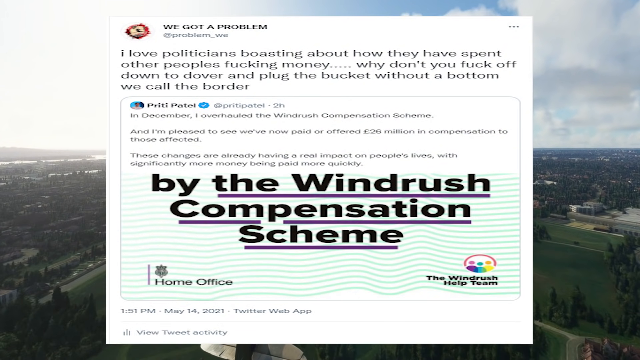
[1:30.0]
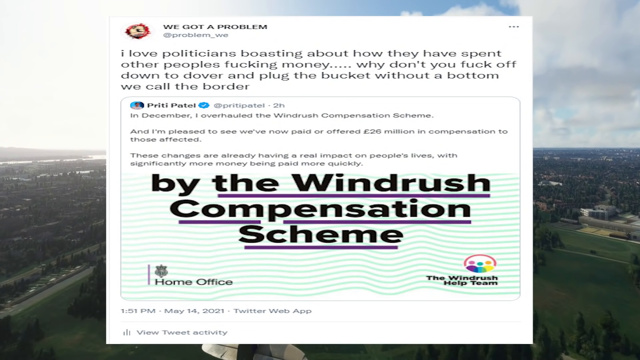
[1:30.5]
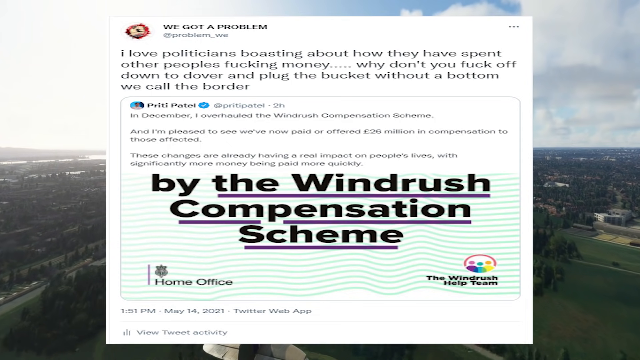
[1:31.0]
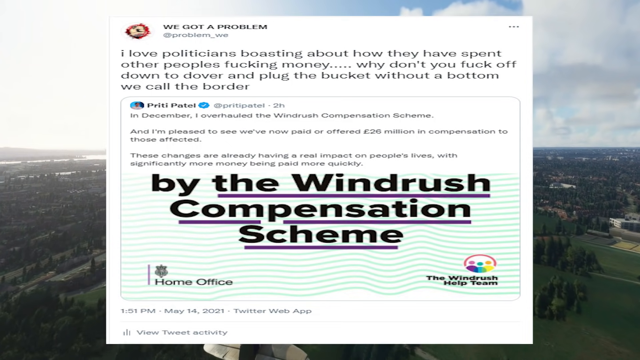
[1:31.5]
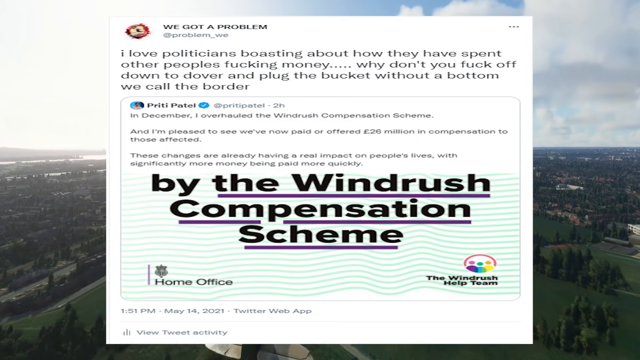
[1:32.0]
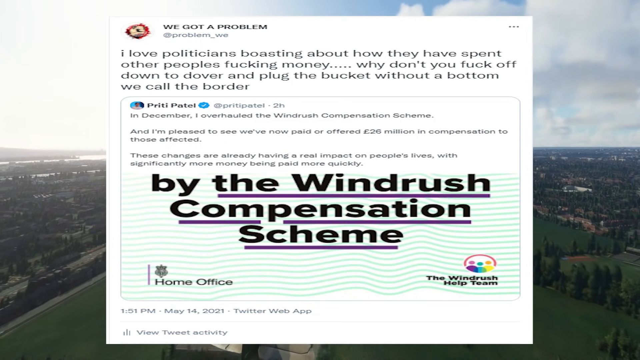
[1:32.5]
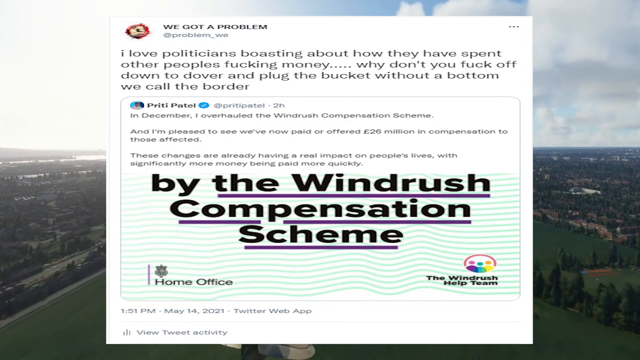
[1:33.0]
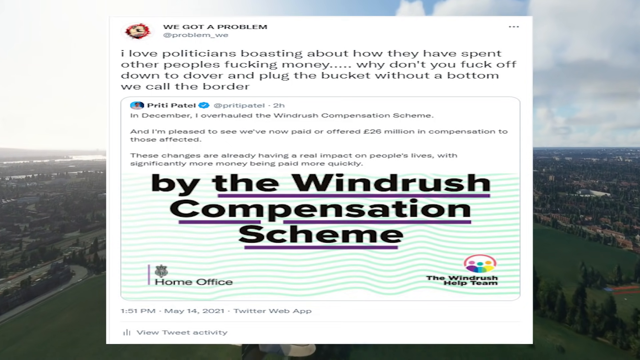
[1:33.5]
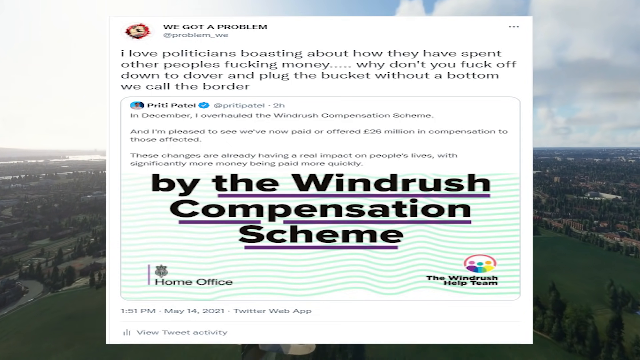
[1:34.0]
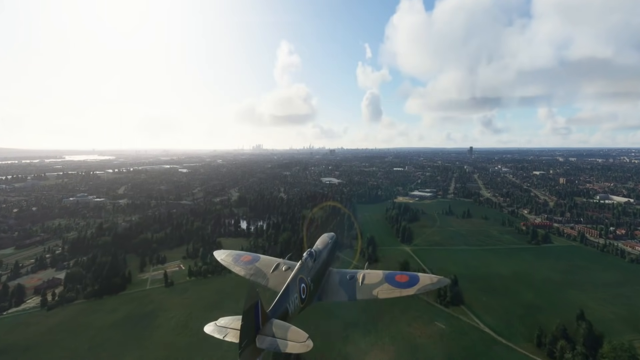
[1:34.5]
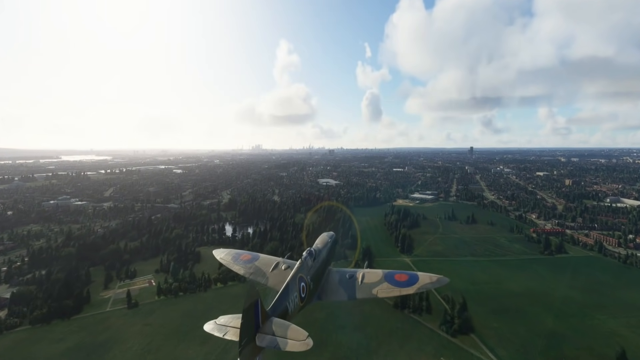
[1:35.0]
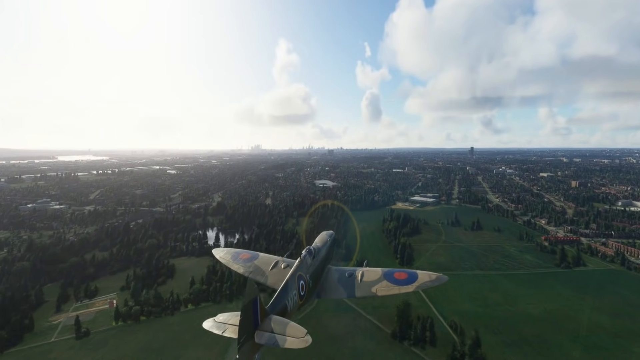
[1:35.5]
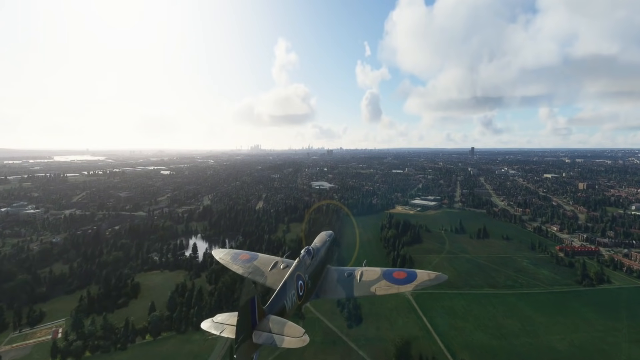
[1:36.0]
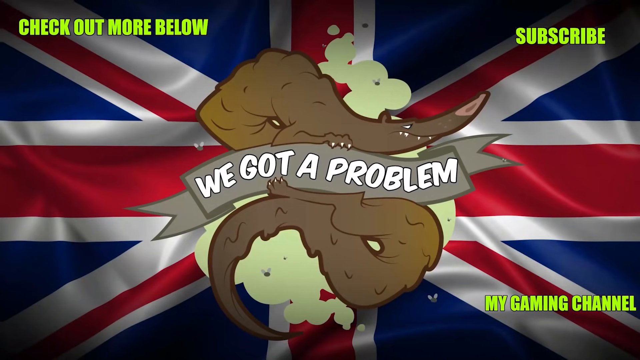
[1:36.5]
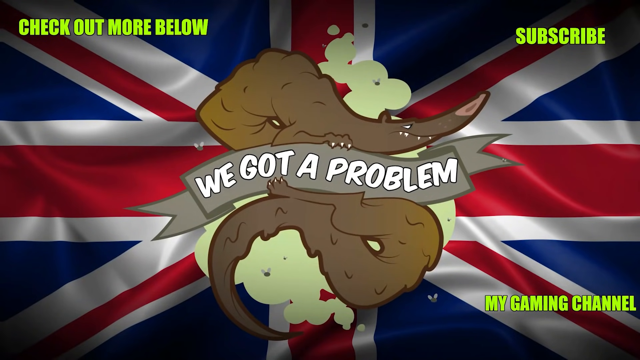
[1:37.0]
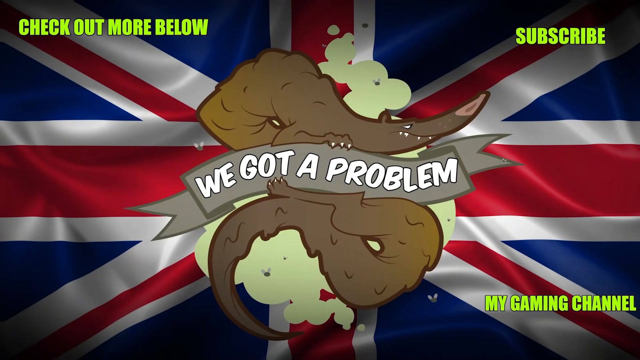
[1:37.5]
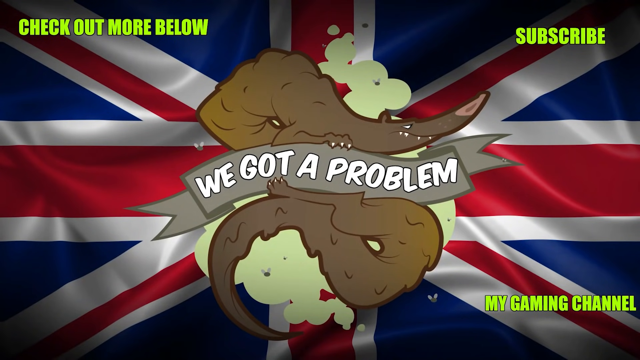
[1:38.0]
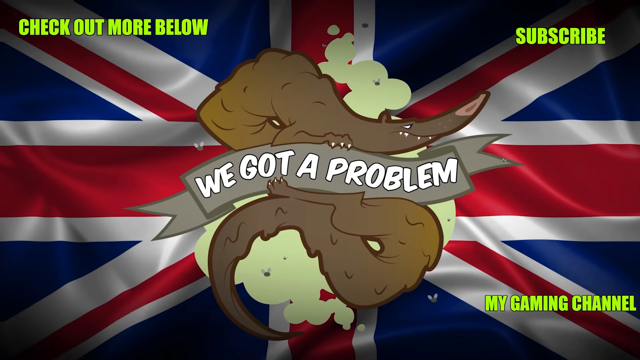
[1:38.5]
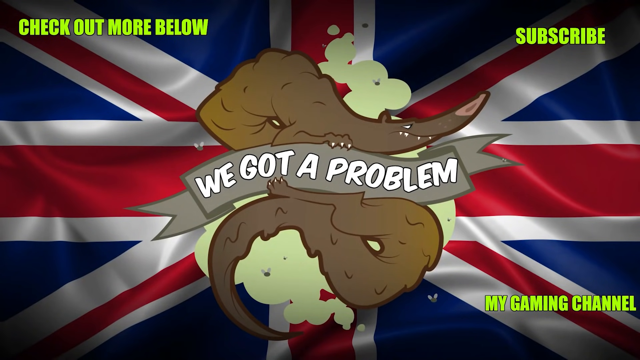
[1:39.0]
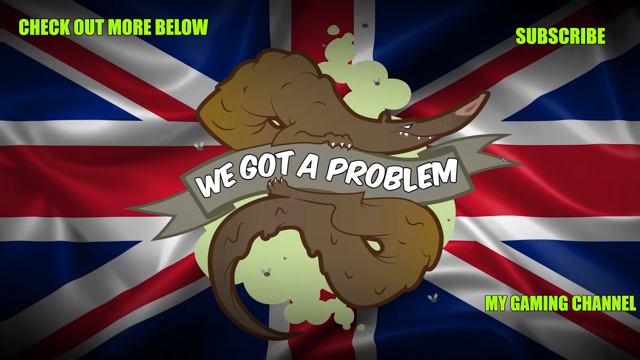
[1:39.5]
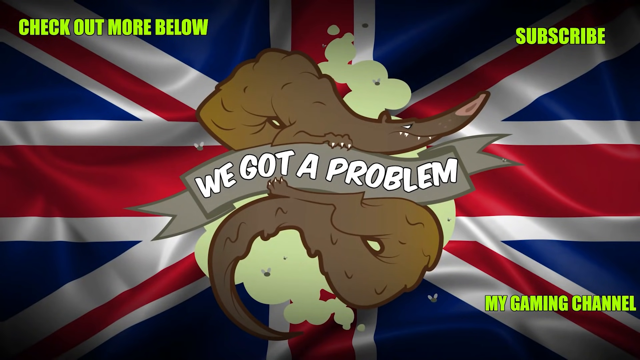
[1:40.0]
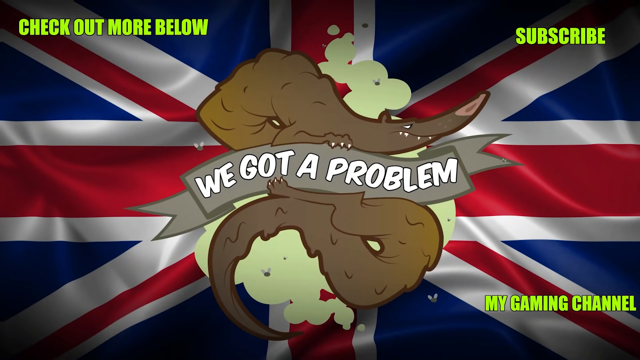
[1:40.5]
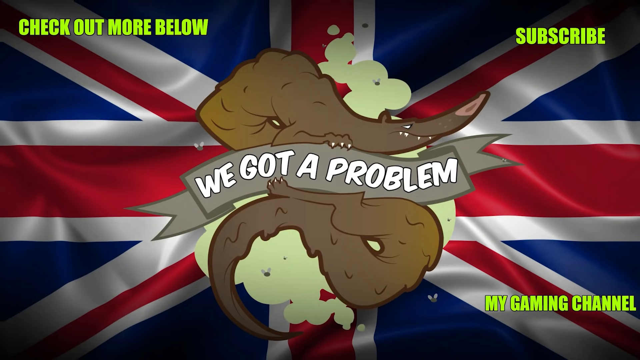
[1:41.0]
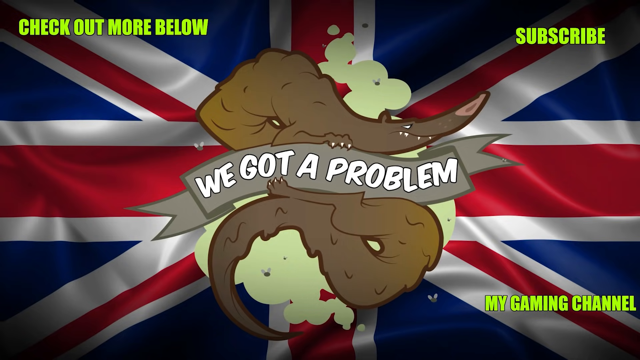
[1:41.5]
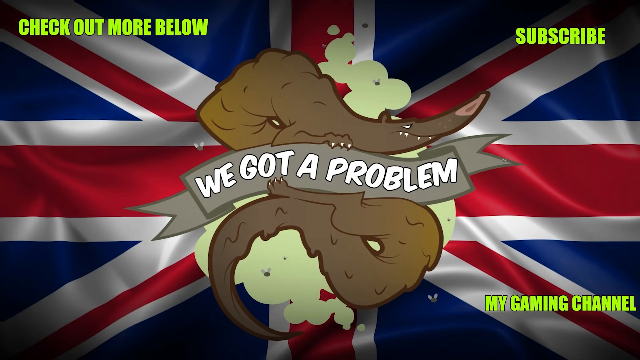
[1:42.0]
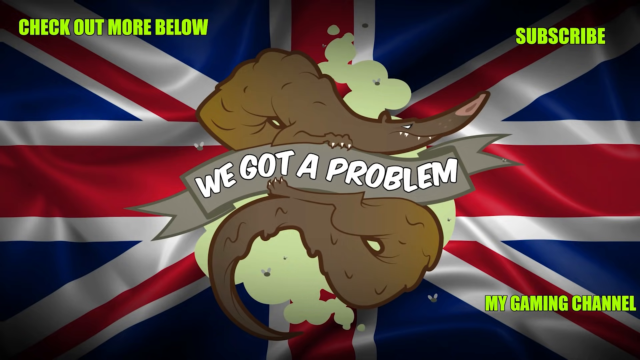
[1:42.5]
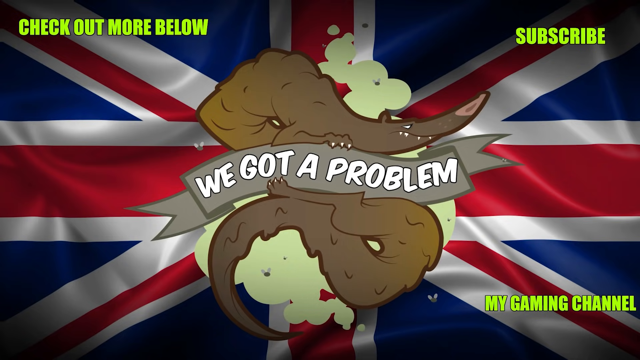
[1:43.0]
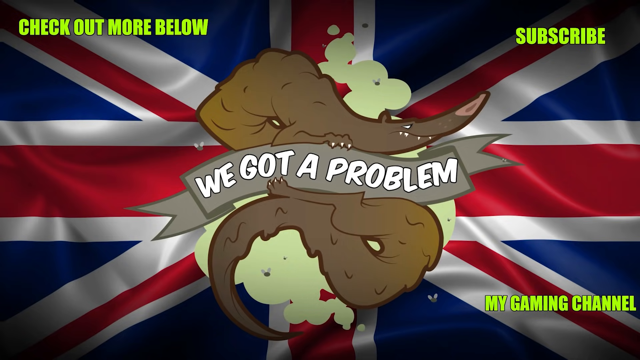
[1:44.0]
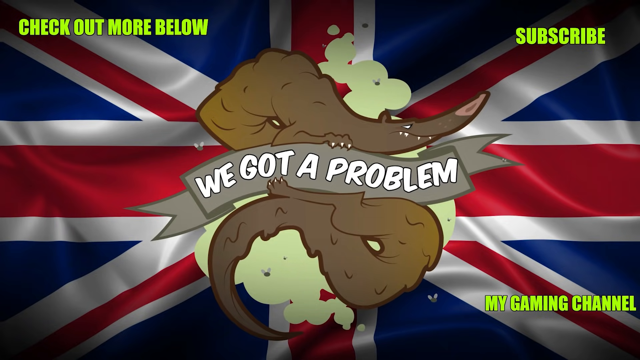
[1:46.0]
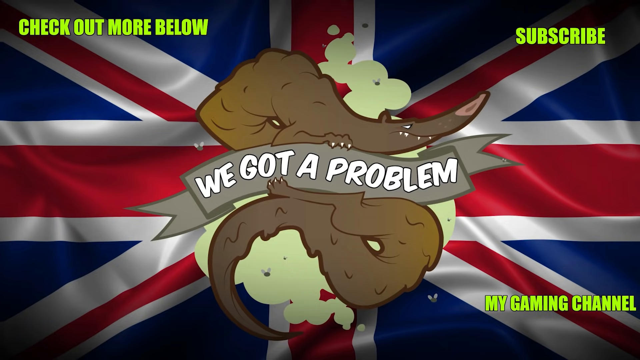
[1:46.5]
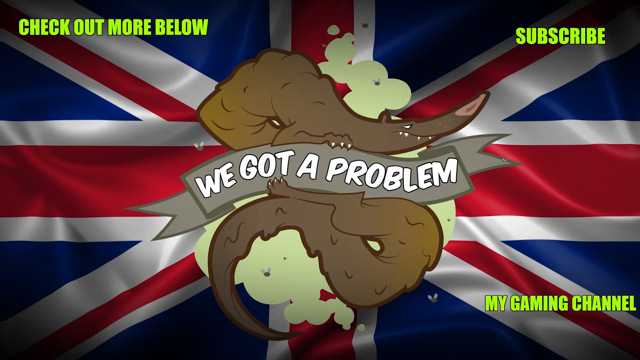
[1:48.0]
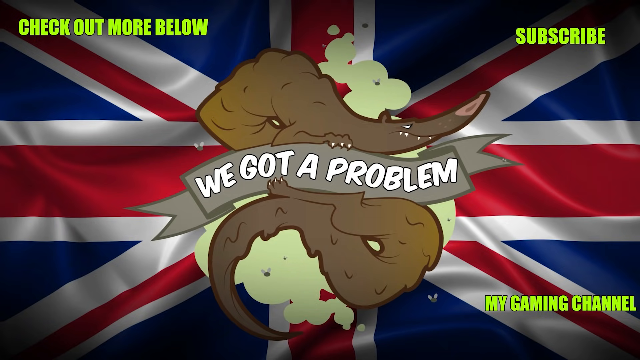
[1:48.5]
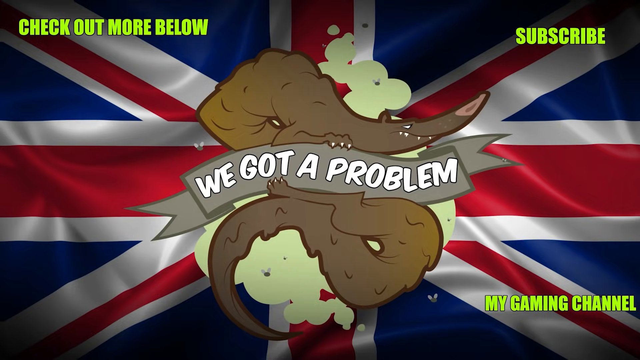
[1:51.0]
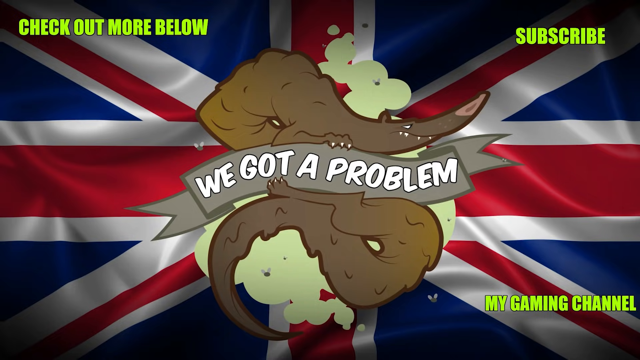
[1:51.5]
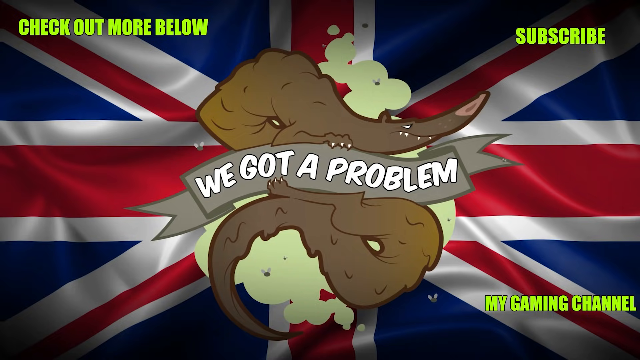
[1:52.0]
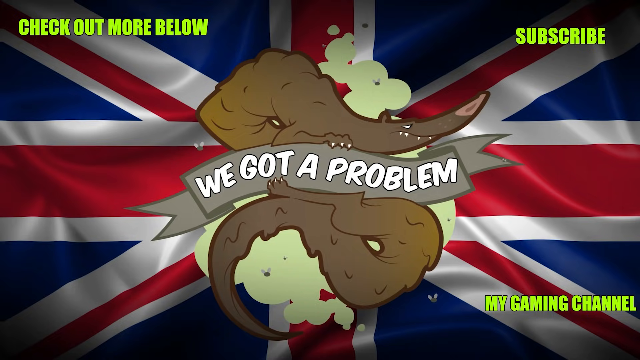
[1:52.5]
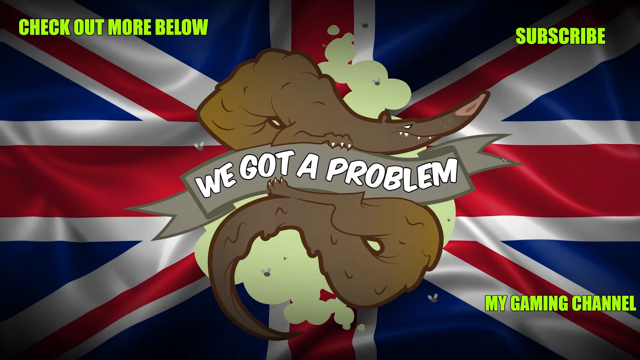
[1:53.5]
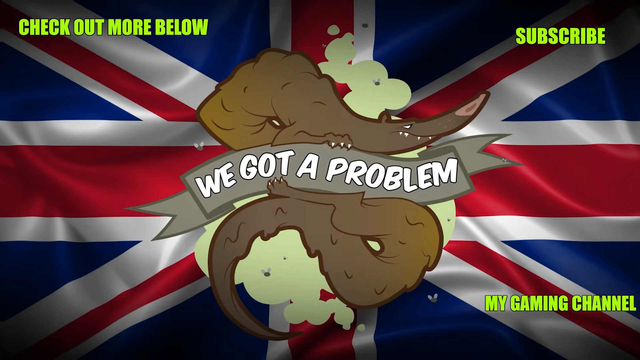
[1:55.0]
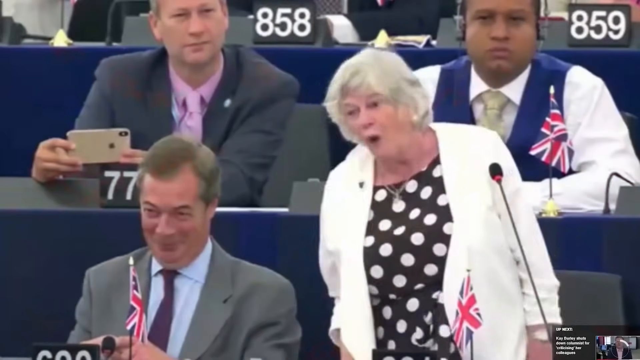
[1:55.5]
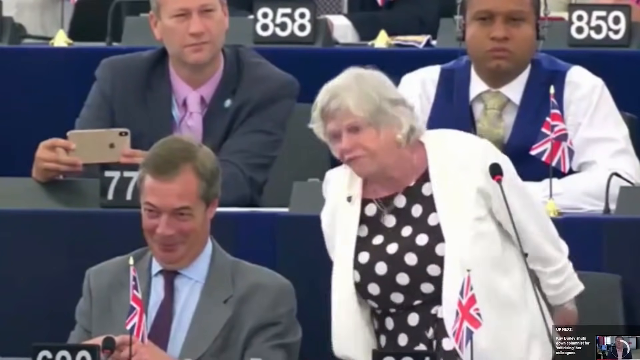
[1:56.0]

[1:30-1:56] Land moves underneath a pop-up that says "by the windrush compensation scheme" in big bold black letters, with a write-up at the top that says "we got a problem" and uses the F word. The pop-up goes away, and a crop duster plane flies very low to the ground over trees, land and water, its propeller turning. Then a screen appears with "we got a problem" on a curved banner in the middle and what looks like a cartoon animal in the background. "check out more below" is in the left corner, "subscribe" in the right corner, and "my gaming channel" in the lower right corner. The screen almost looks like it is on a British flag, with a blue background and red and white stripes.